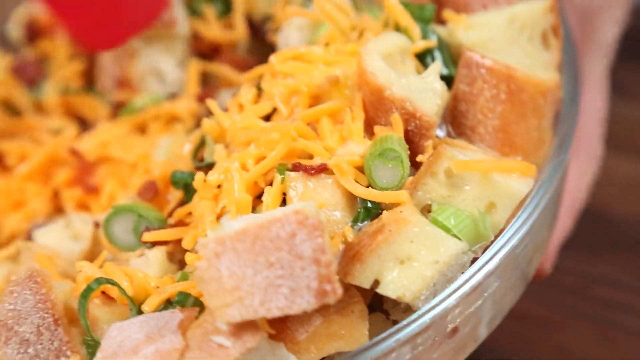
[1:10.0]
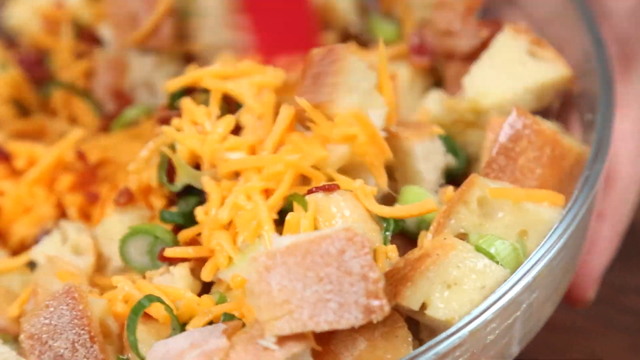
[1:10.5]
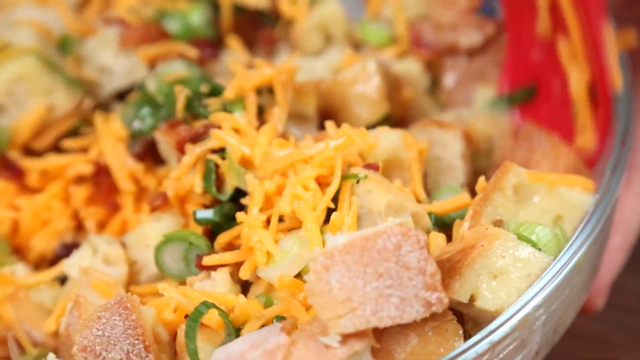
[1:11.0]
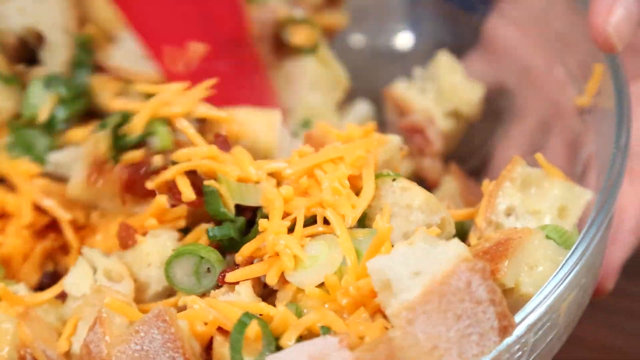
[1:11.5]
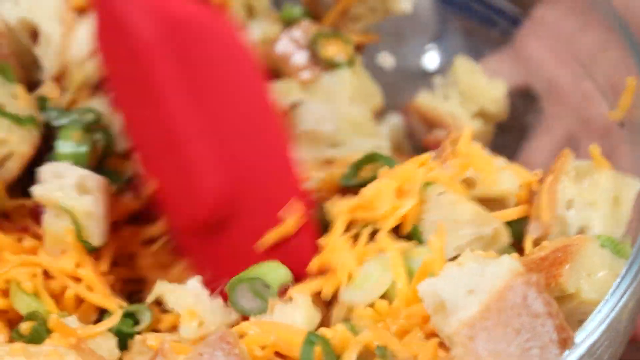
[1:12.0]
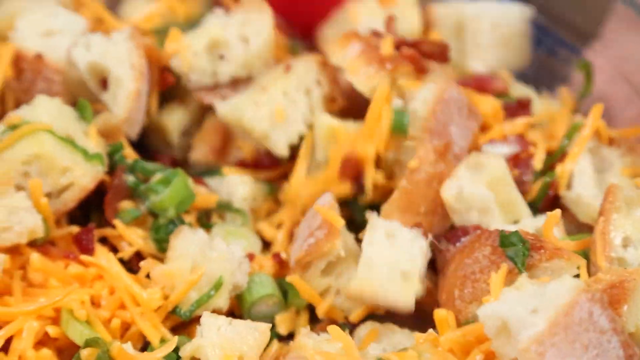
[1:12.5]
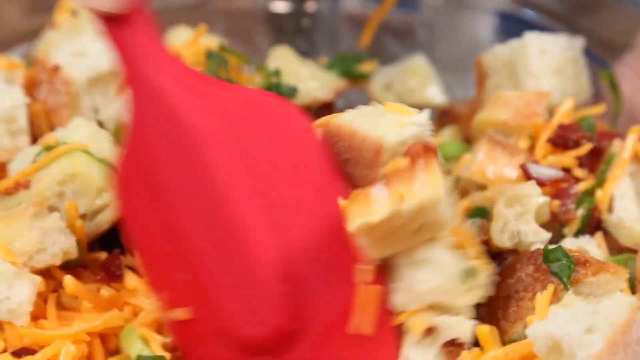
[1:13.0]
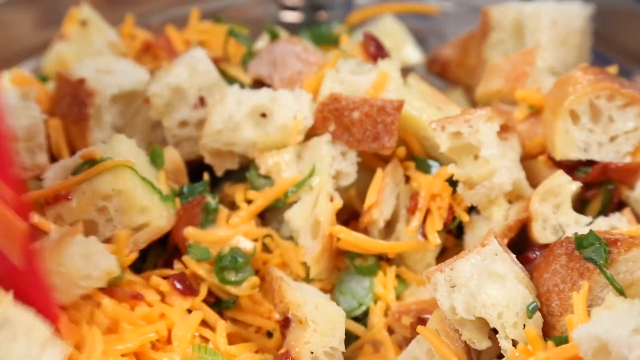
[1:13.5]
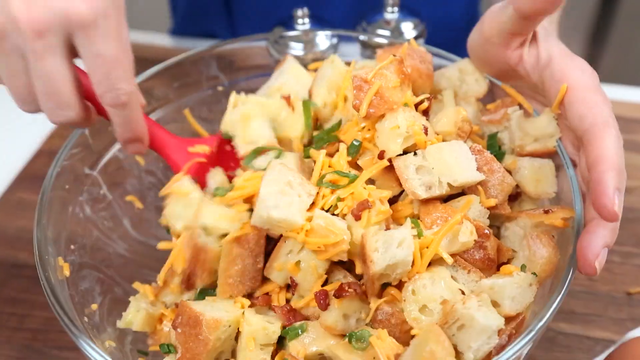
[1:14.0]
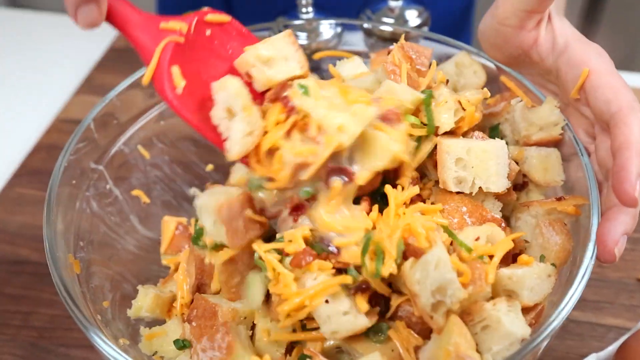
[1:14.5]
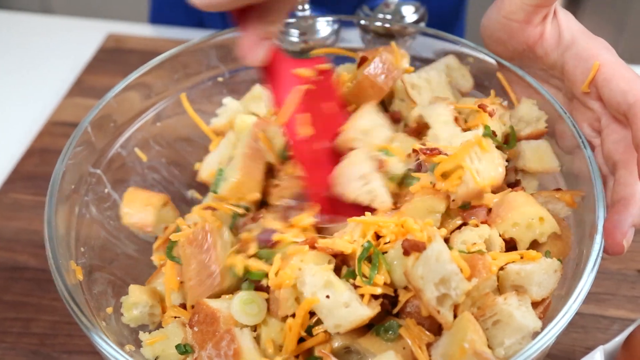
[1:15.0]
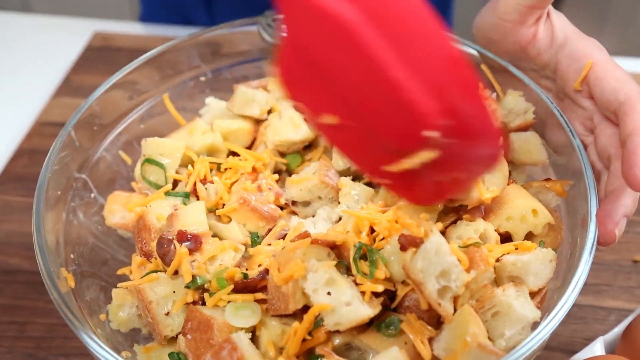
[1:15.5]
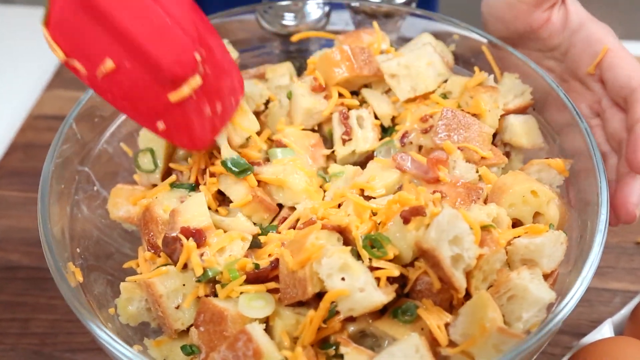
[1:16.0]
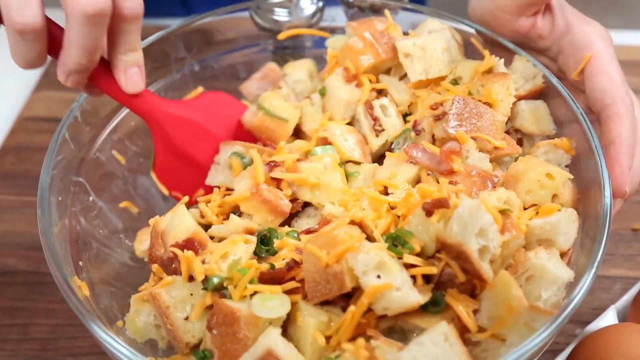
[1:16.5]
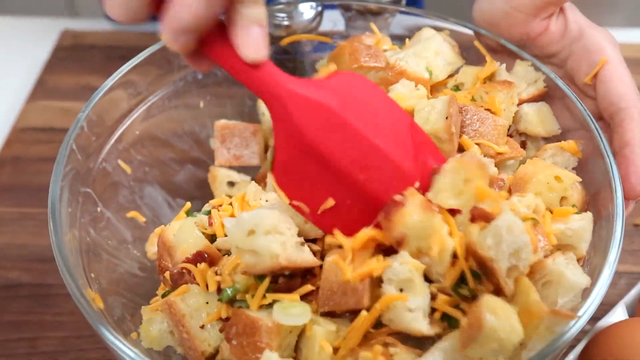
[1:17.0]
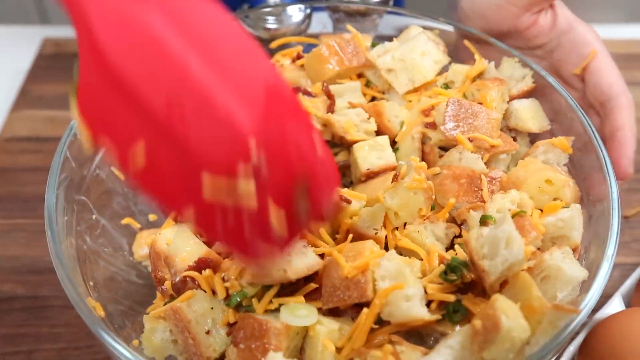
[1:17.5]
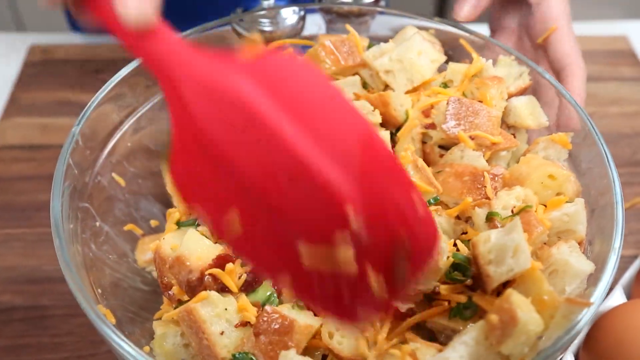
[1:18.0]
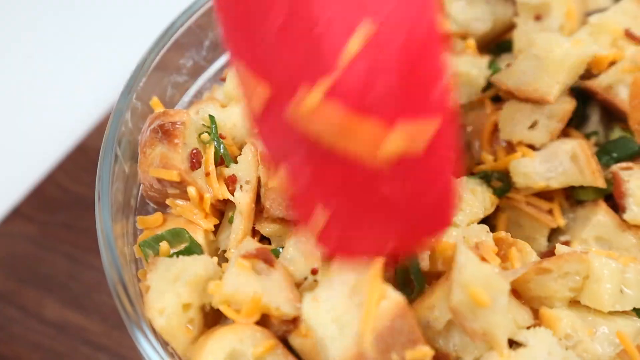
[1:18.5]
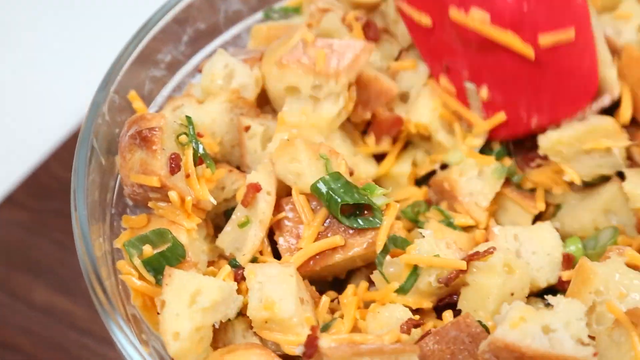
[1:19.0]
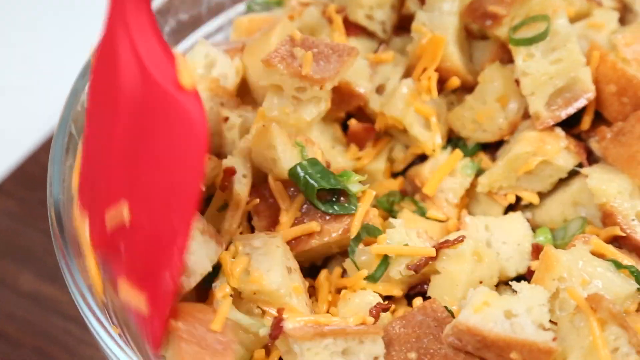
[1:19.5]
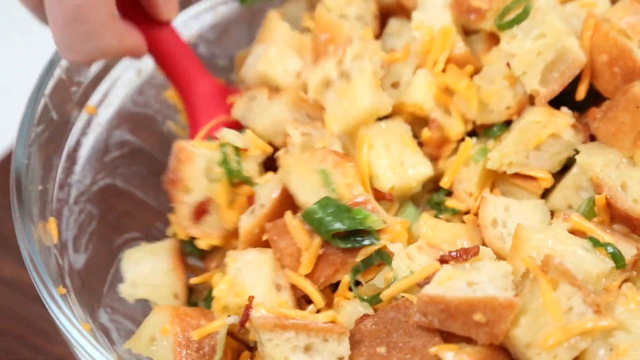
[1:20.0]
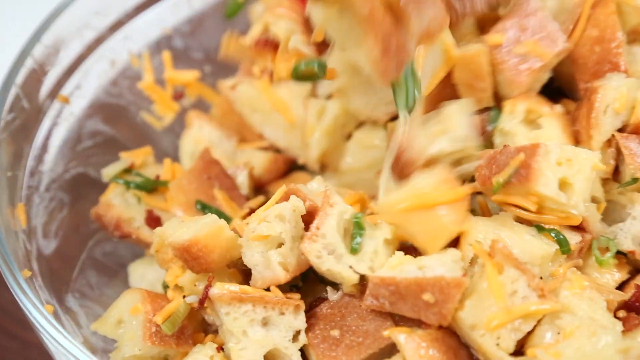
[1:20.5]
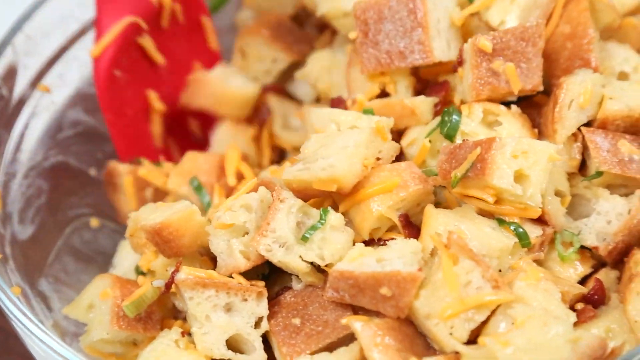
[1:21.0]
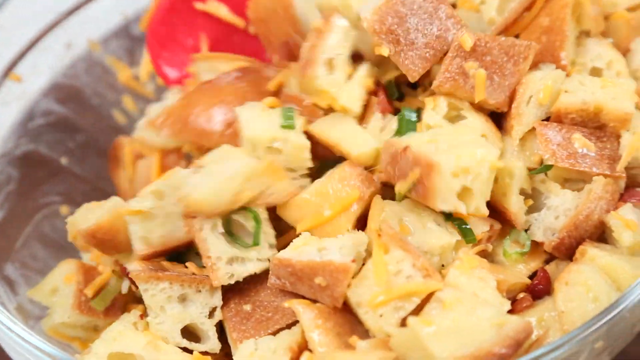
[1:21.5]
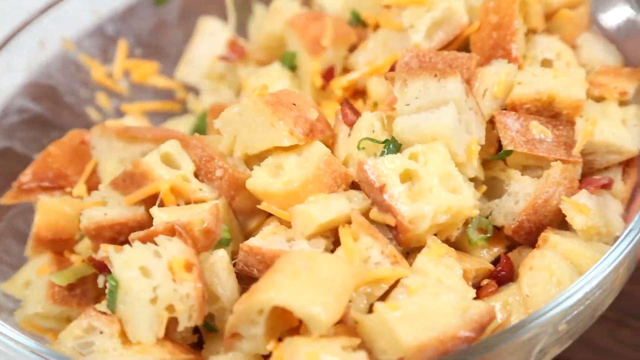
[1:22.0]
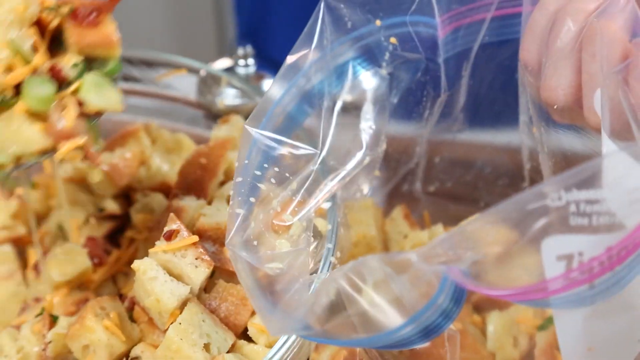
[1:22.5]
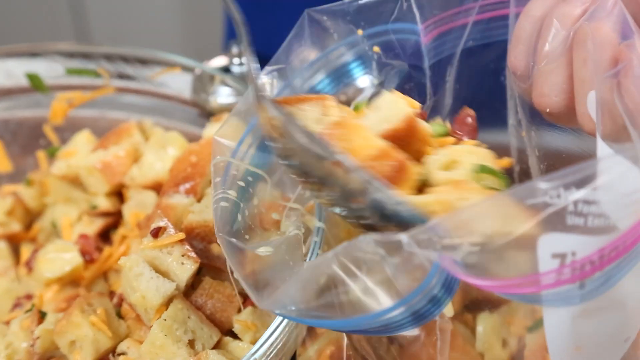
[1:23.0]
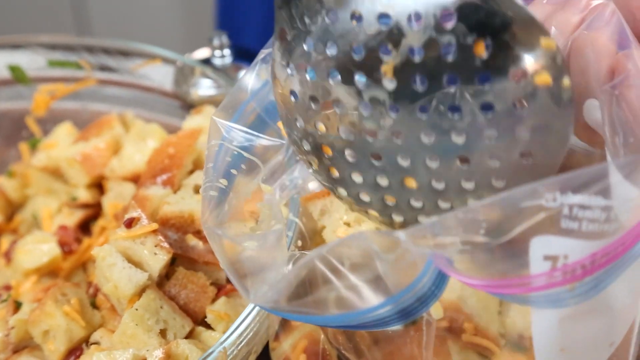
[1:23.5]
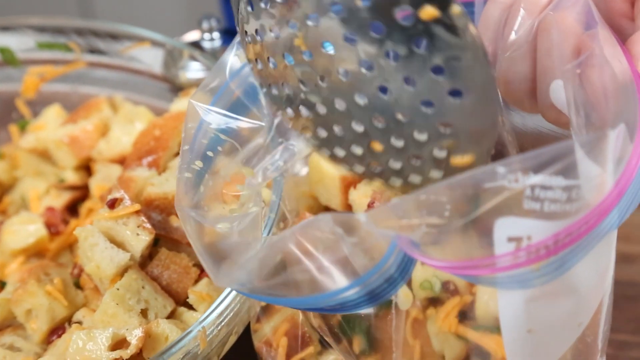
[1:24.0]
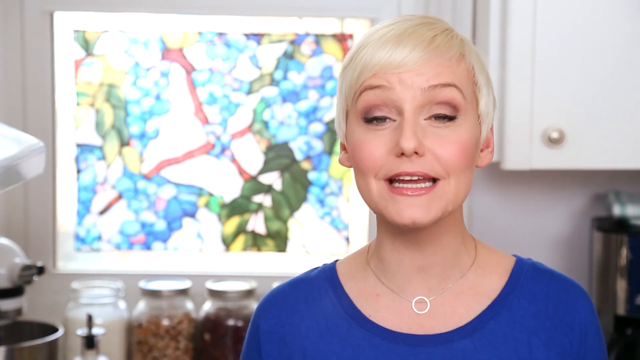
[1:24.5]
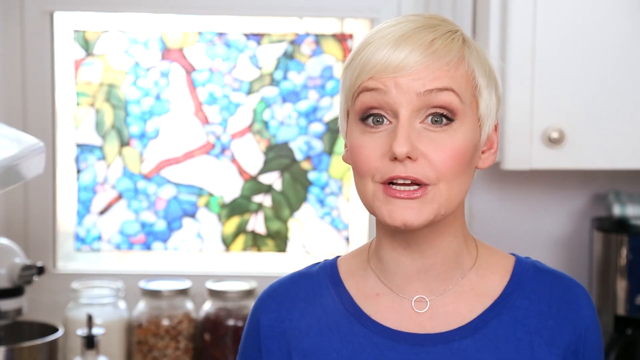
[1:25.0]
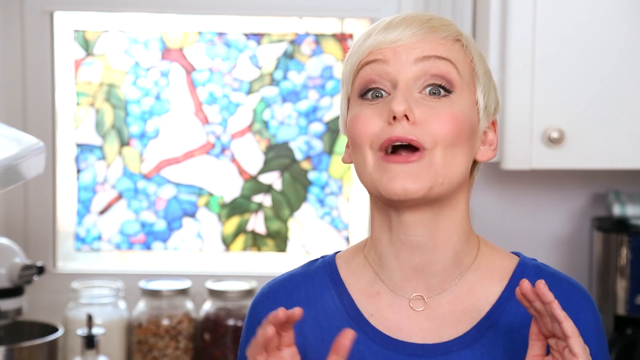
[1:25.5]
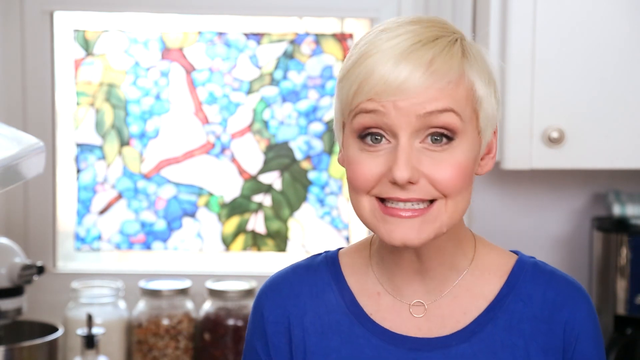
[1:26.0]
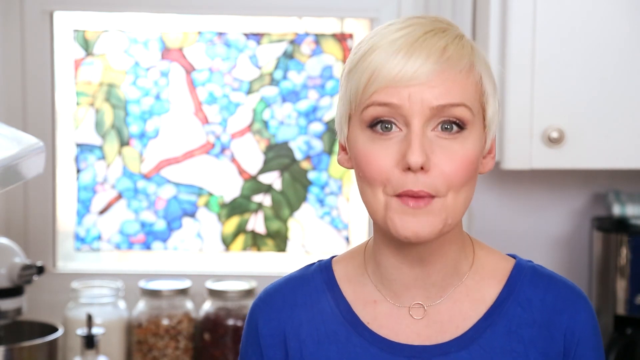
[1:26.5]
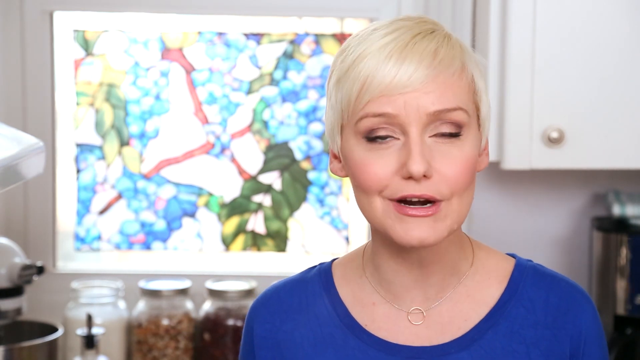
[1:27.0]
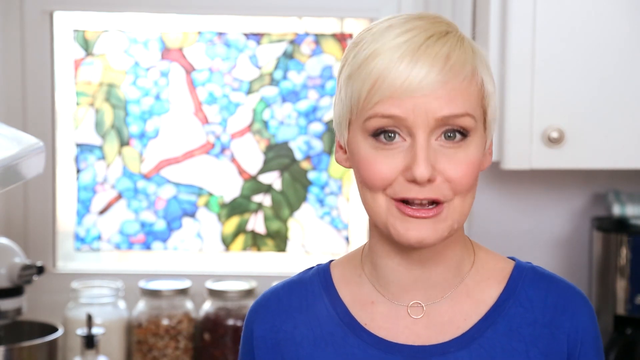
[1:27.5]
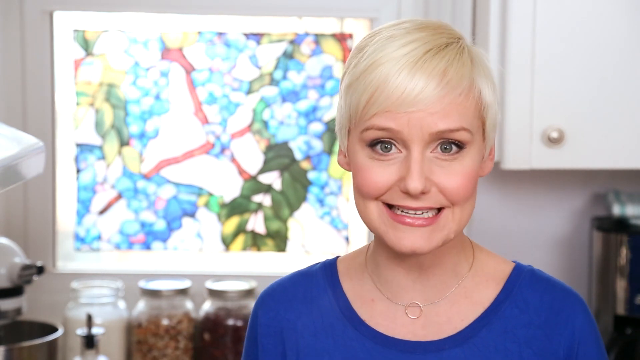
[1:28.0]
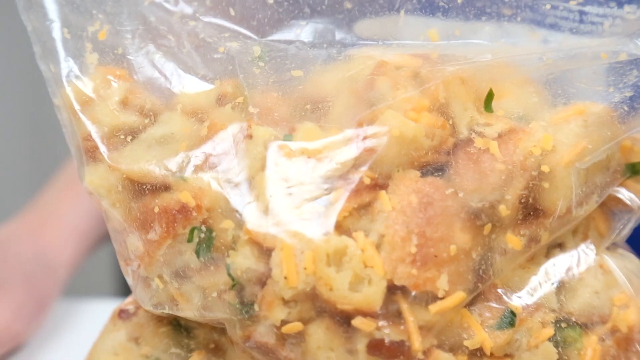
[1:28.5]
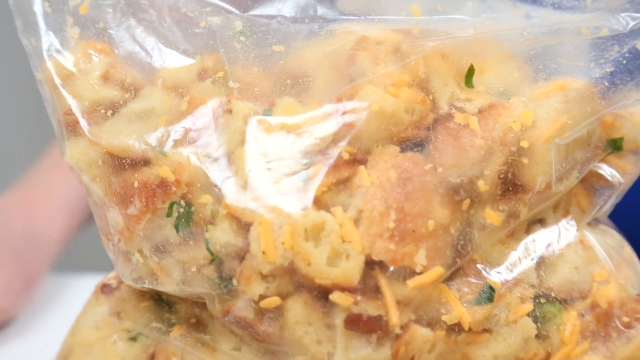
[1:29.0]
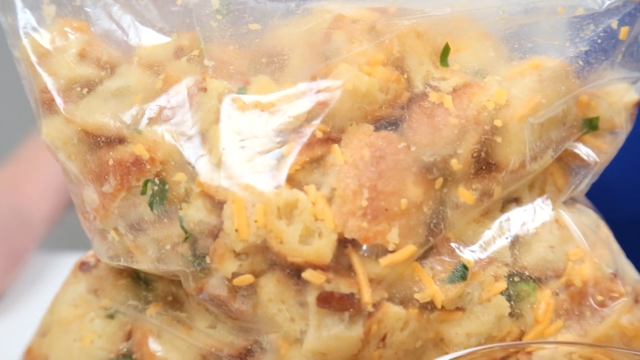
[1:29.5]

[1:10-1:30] A large, transparent glass bowl contains cheese, chives, what looks to be cubed pieces of fresh bread, maybe a baguette, and what also looks to be bacon bits. A hand beneath the bowl holds it while a red mixing spatula moves steadily to mix the ingredients, moving the cheese. An overhead shot from a different angle shows the hand of the person mixing, with a brown cutting board and a white table beneath the glass bowl. As the mixing continues, the ingredients become more evenly distributed, the red spoon used softly, and the cheese blends in rather than standing out on top as before. Next, the ingredients are placed into a large Ziploc bag. The woman with platinum blonde hair and heavy makeup then begins speaking into the camera.